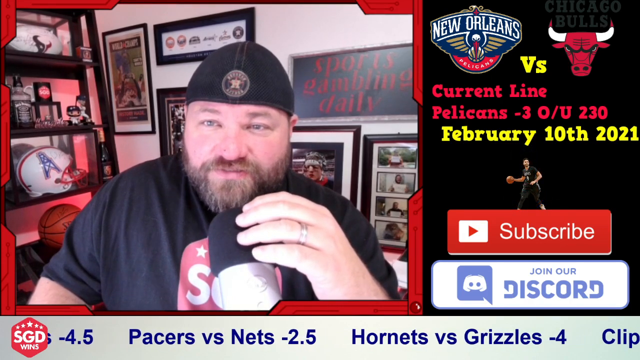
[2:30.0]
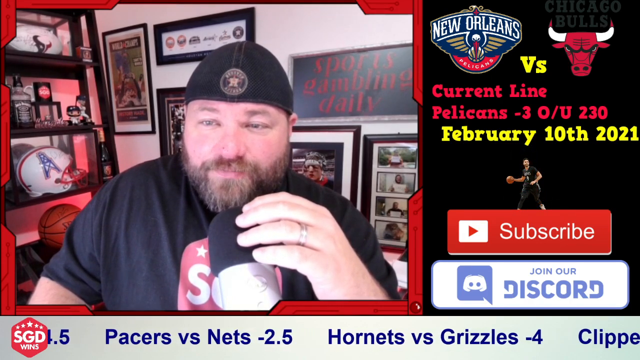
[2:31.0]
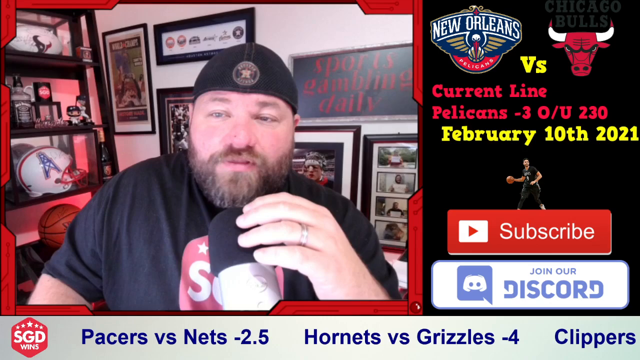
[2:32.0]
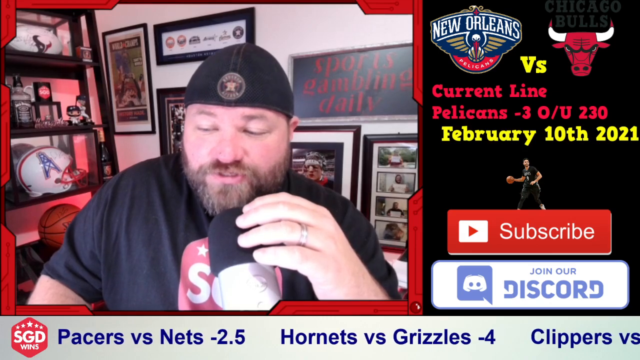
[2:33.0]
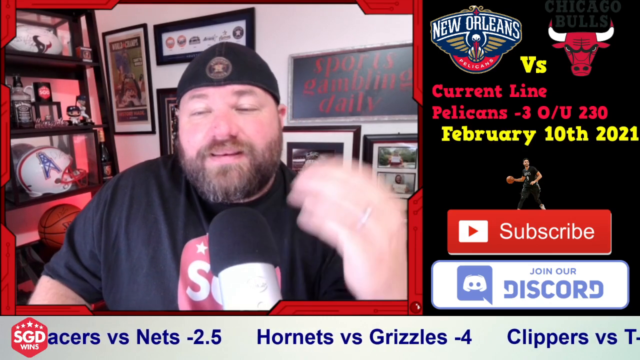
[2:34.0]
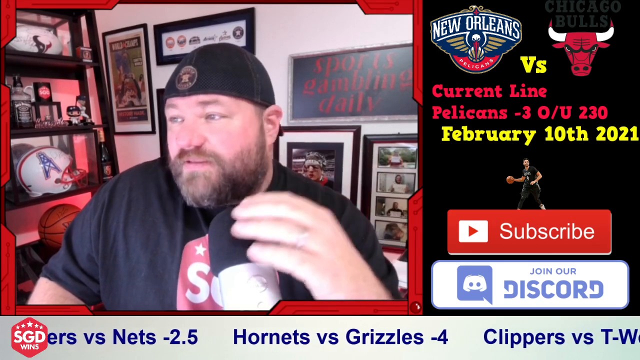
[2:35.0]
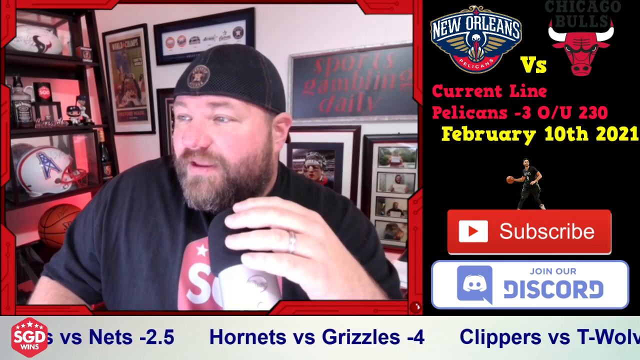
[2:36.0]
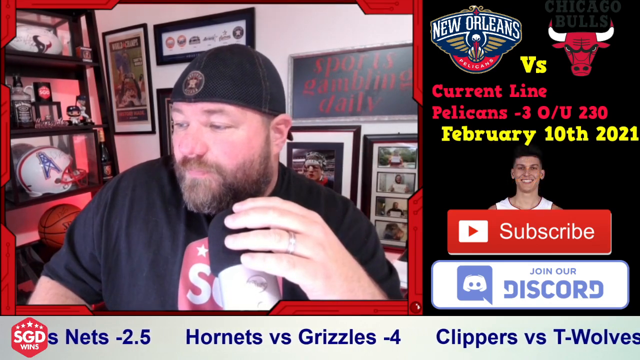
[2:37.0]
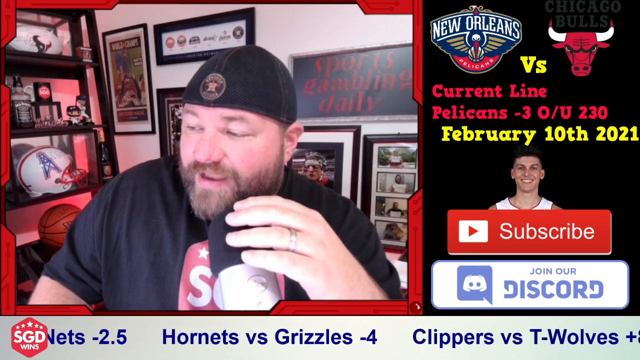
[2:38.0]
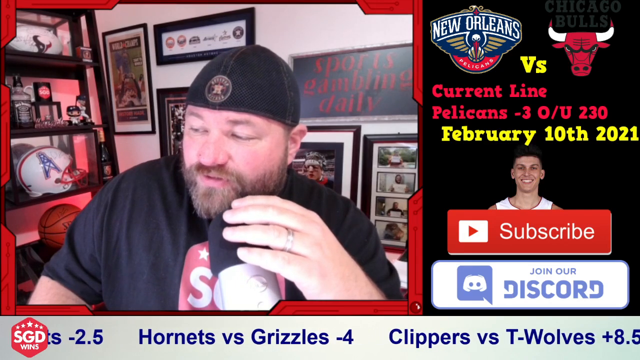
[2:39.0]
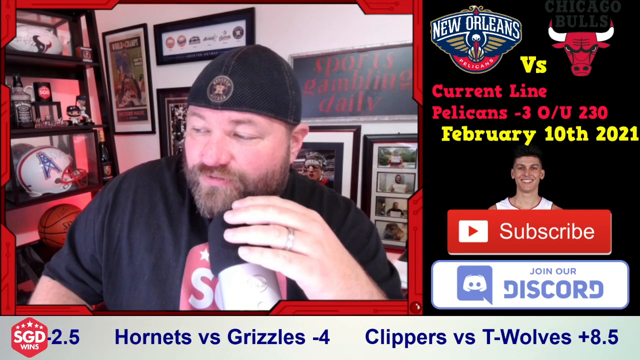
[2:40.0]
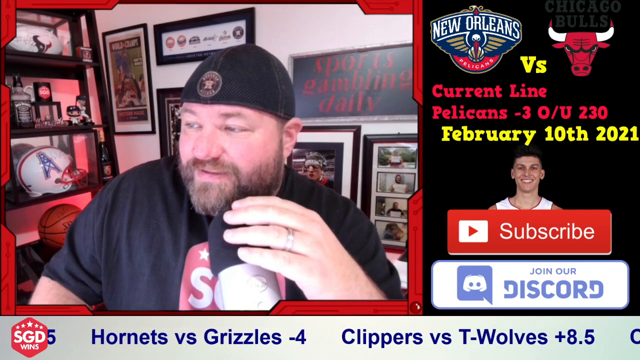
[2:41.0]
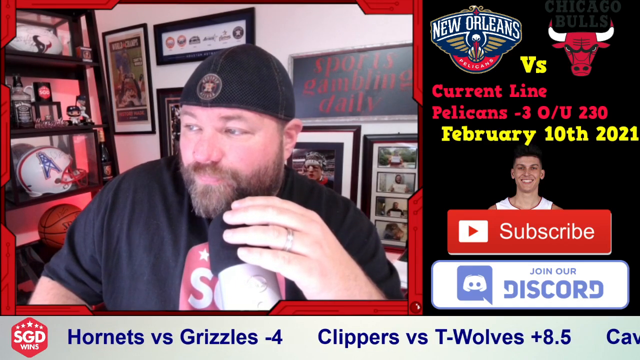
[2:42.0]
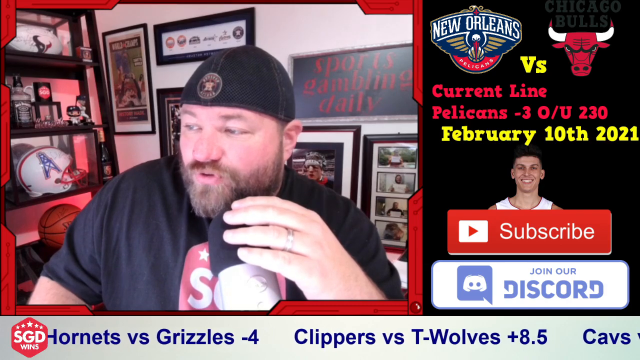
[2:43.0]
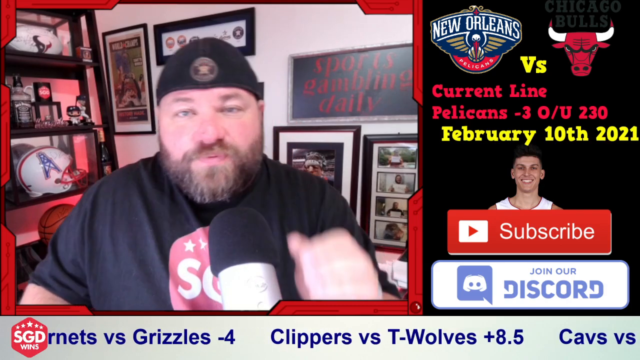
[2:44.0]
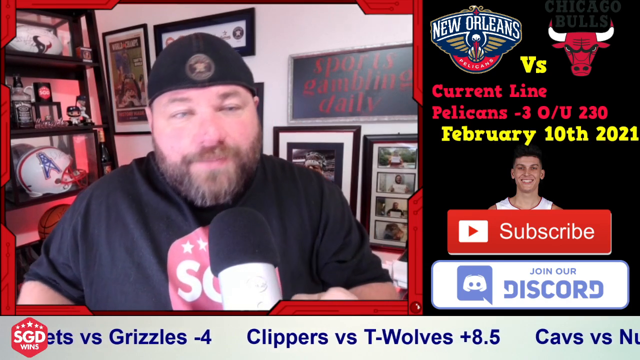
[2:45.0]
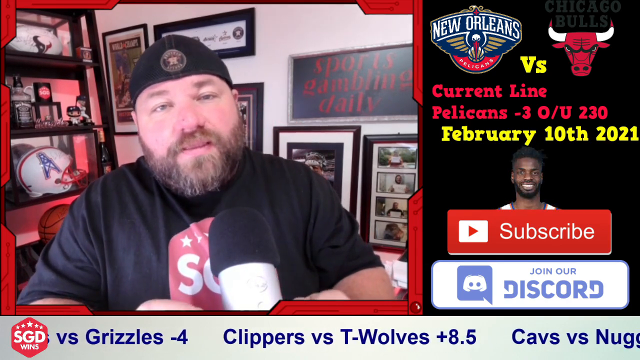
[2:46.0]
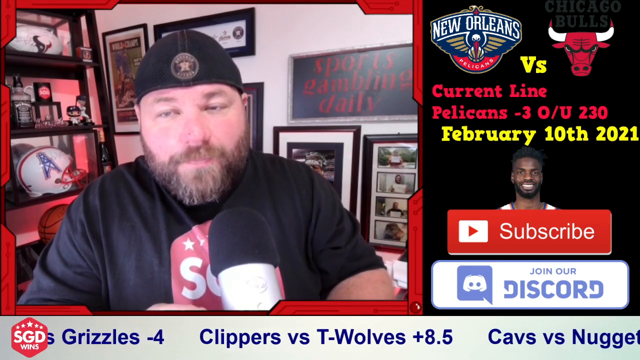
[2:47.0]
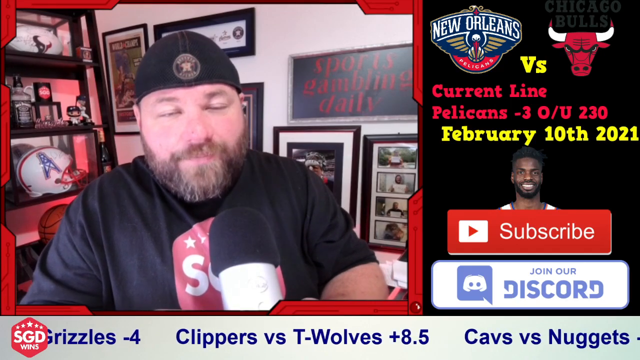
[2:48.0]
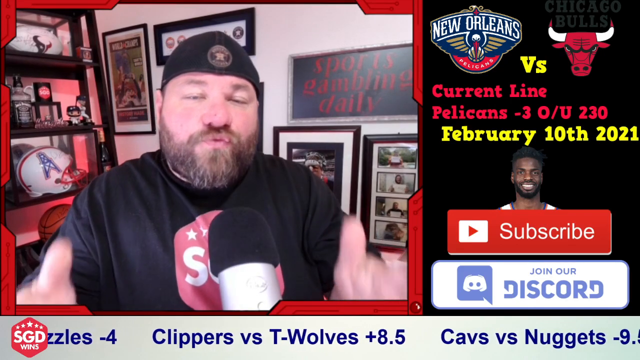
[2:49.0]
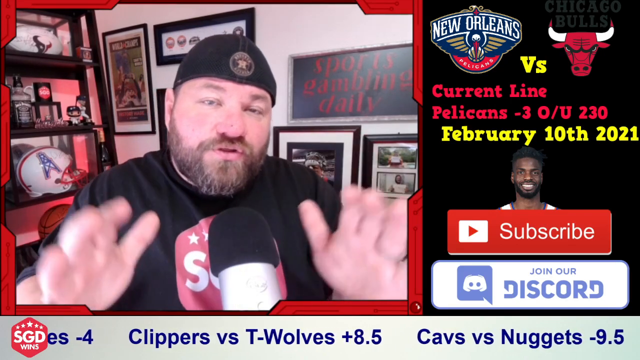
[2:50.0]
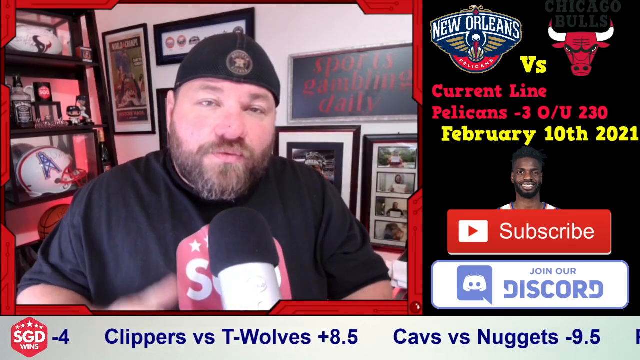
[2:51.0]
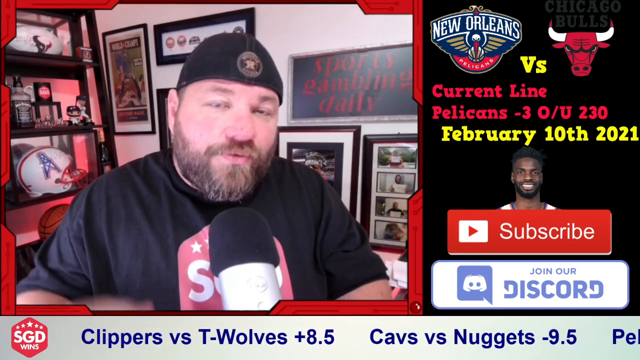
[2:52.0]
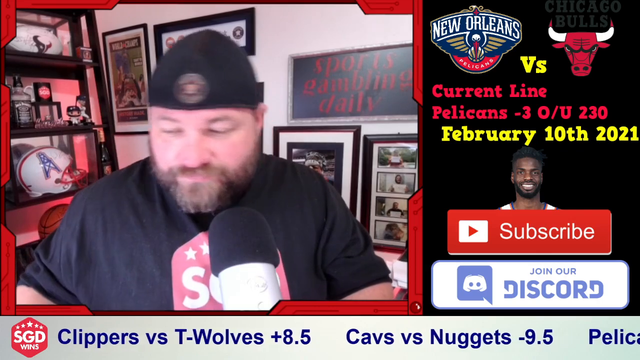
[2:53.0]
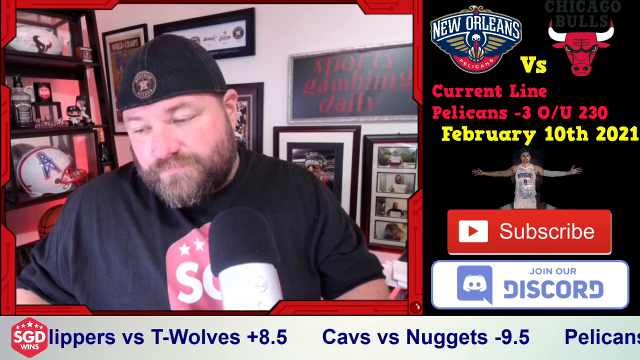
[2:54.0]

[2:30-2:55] The screen is split. On the left is a man wearing a black baseball cap turned backwards and a black shirt with red and white print on the front. Behind him are a basketball, a Houston Oilers football helmet, a Texans football, and some trophies, and he is in front of many different pictures and framed items. Behind him is a hard-to-read sign that says "sports daily", with a black background and red, slightly shiny print. On the right there is an emblem on a black background with text reading "New Orleans versus" and a picture of a red bull with white horns, for the Chicago Bulls. Red print reads "current line pelicans -3 O/U 230" and the date underneath says "February 10th 2021". Below the date, pictures of different NBA players, shrunk very small, keep switching, and then there is "subscribe" and "join our discord".